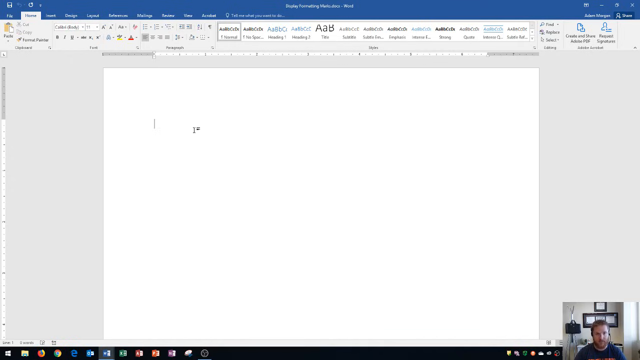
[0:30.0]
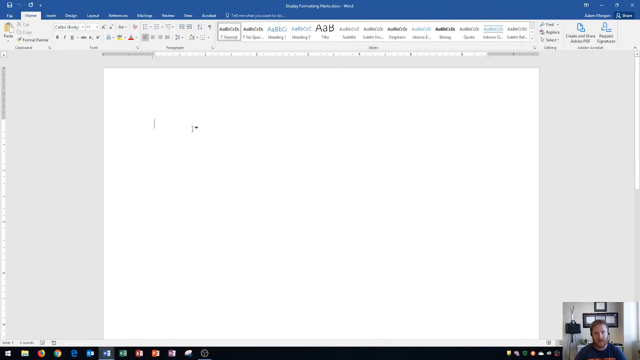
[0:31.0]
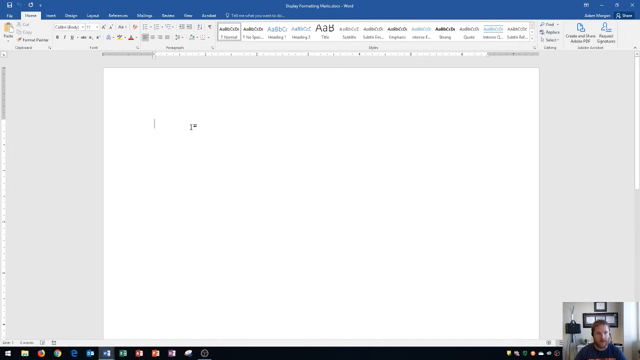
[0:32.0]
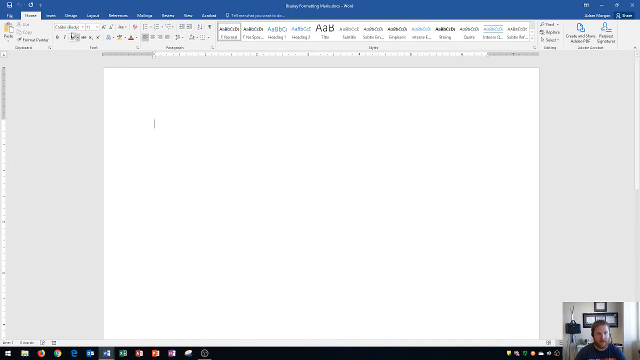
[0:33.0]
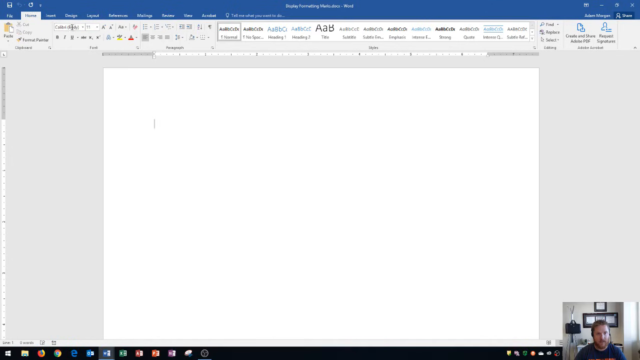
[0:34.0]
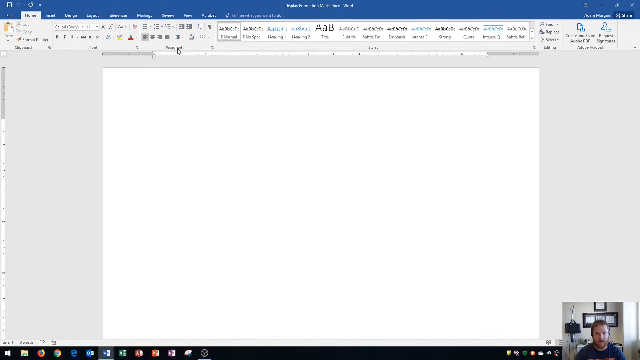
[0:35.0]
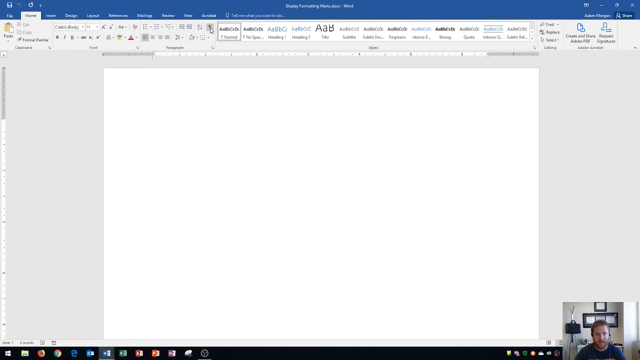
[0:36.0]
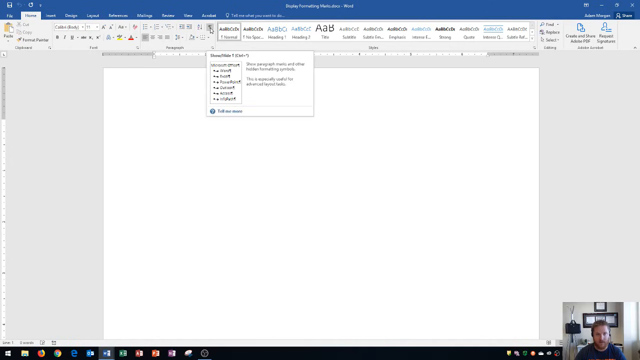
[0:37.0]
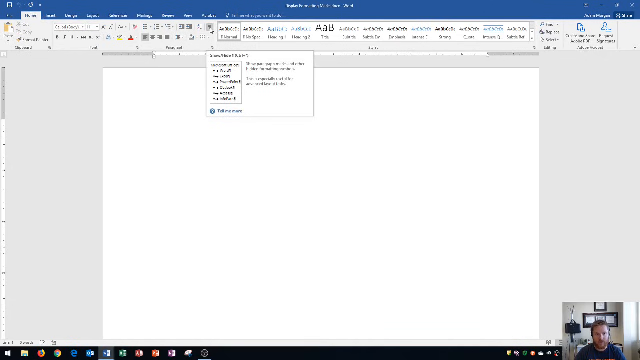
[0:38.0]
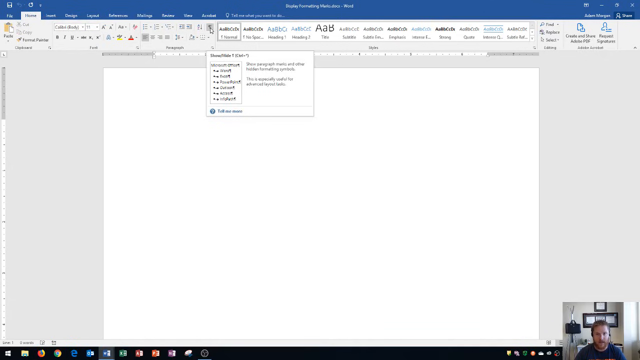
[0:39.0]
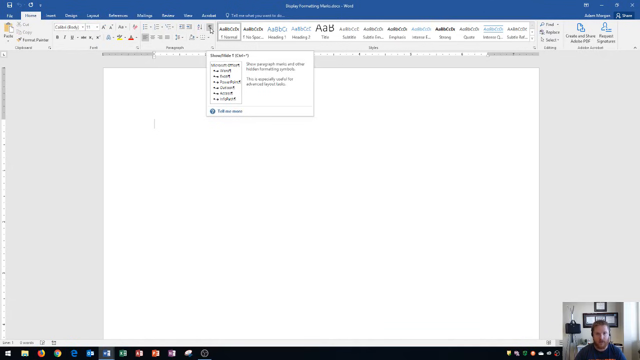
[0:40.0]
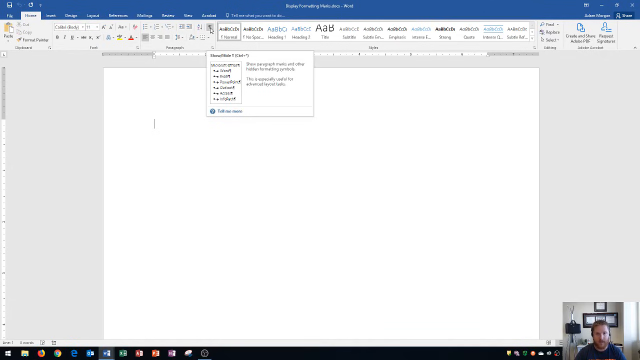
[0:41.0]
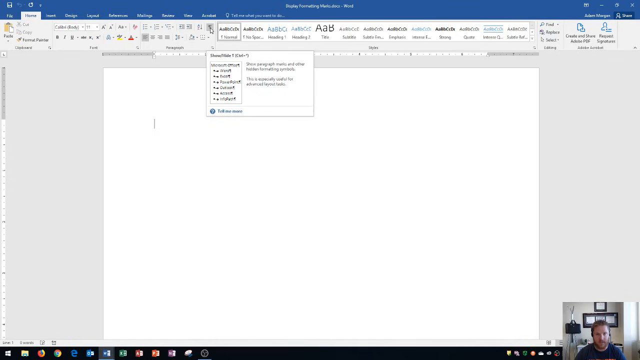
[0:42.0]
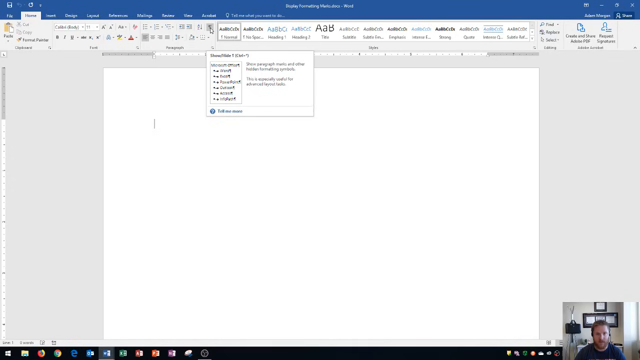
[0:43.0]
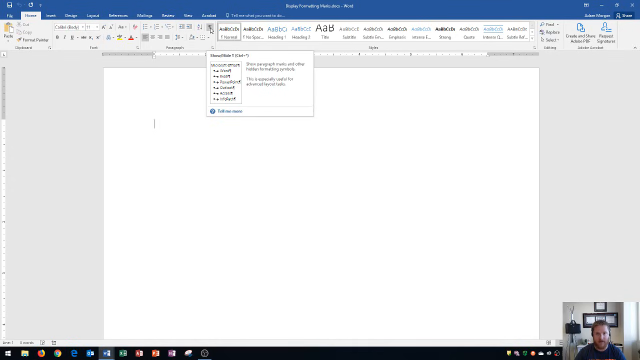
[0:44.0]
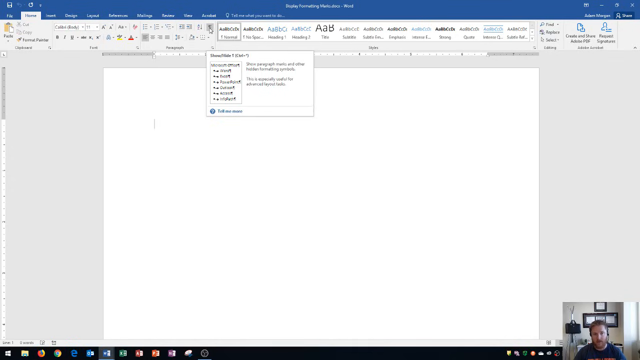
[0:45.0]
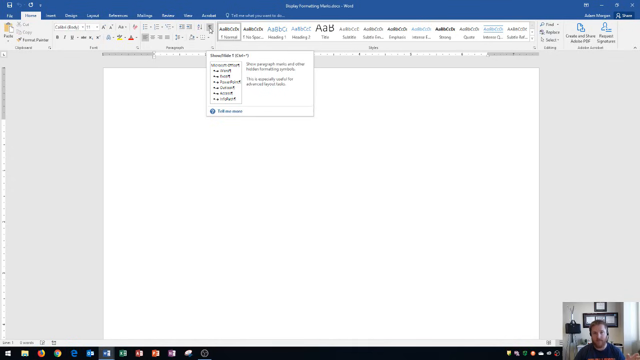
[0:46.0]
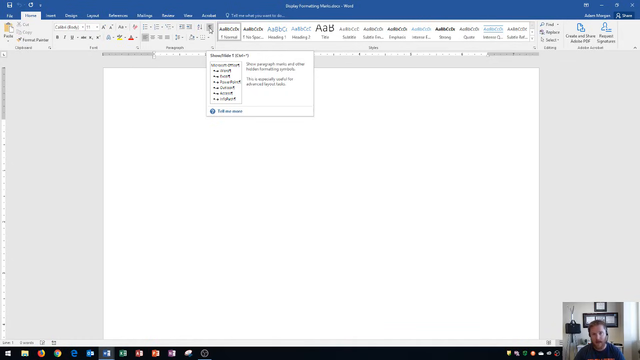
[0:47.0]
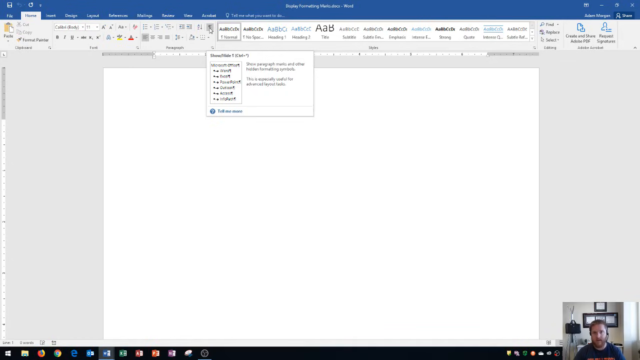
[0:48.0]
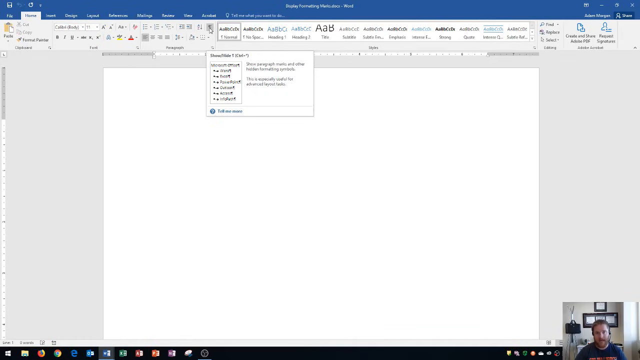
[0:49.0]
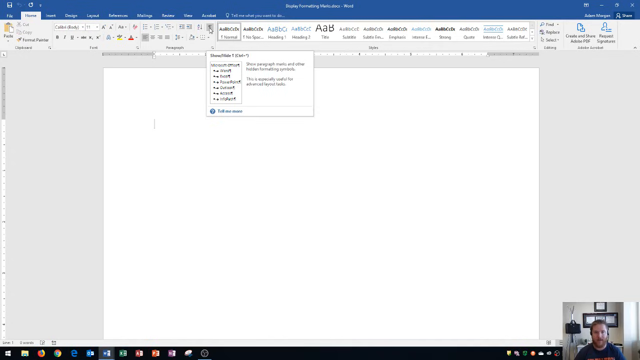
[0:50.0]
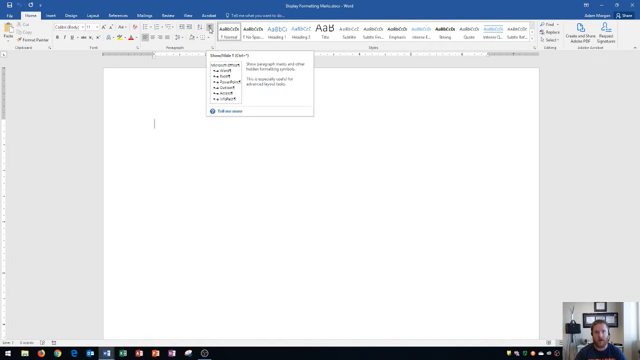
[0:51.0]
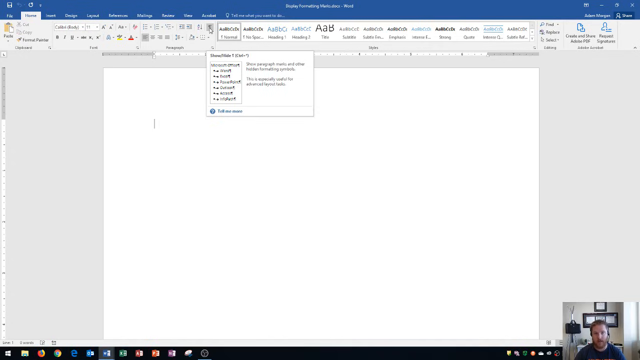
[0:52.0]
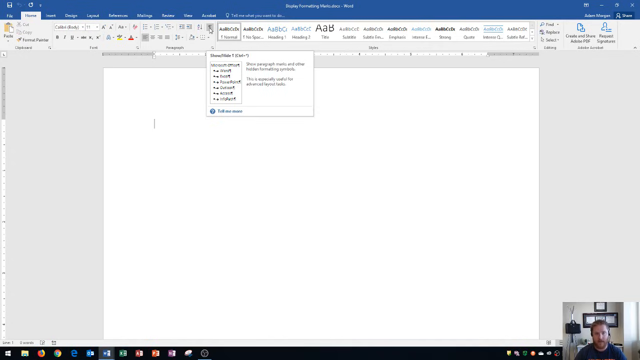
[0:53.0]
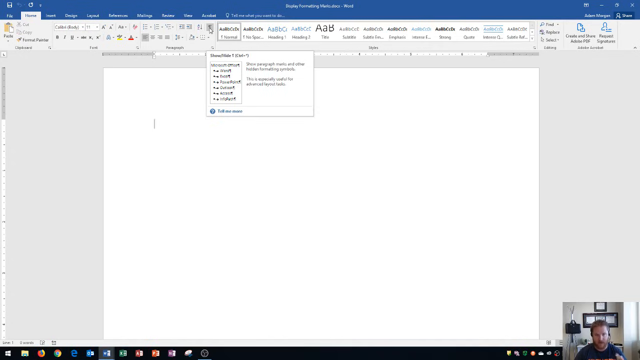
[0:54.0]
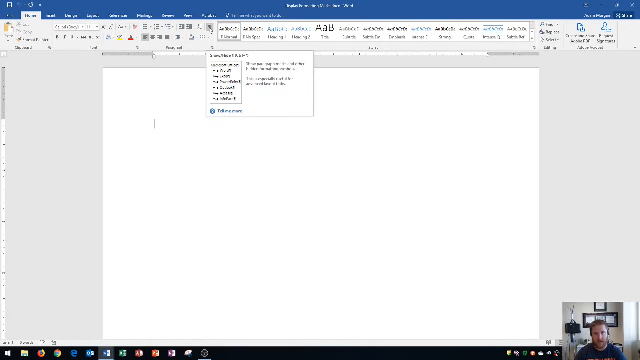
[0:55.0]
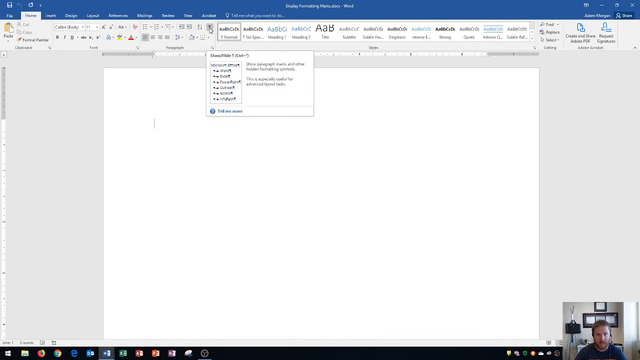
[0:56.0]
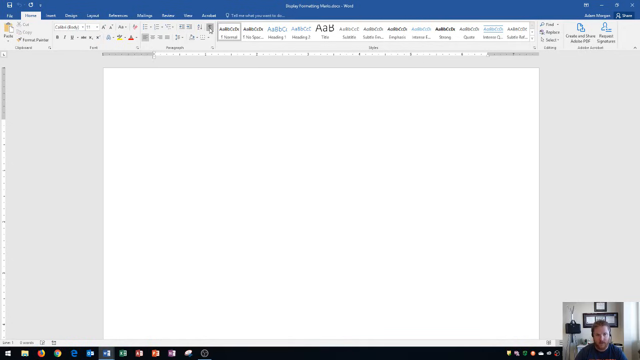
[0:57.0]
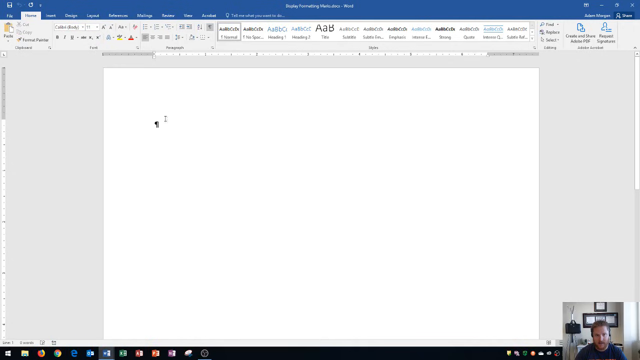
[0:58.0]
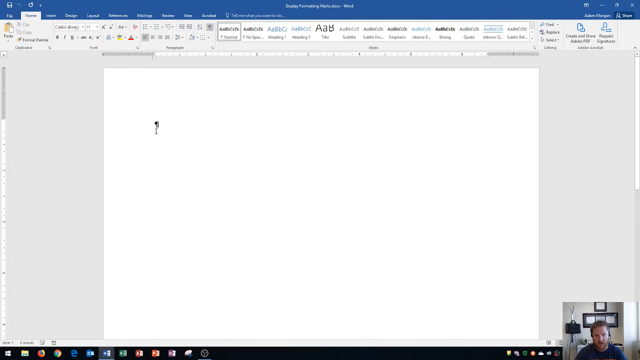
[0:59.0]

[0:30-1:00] The program page remains on screen with the video of the man in the bottom right. The mouse moves toward the middle of the screen and a box drops down, too blurry to read. The man keeps speaking in the small box, mostly still except for his mouth moving. At one point his left hand comes into view making a kind of claw motion with the fingers bent, bounces down to his right and disappears off screen as he continues speaking. Later his left hand appears again, palm toward the camera as if making a point, in a kind of karate chop motion with the palm in and fingers straight, before going down off screen.